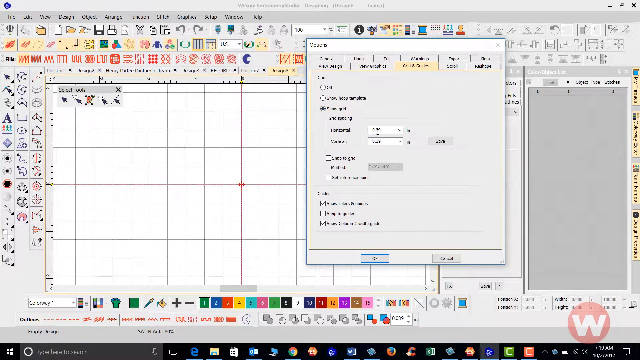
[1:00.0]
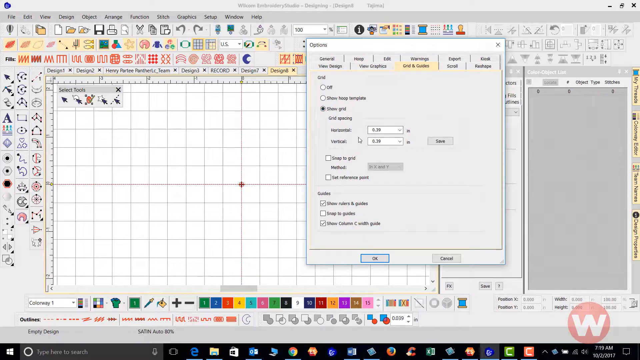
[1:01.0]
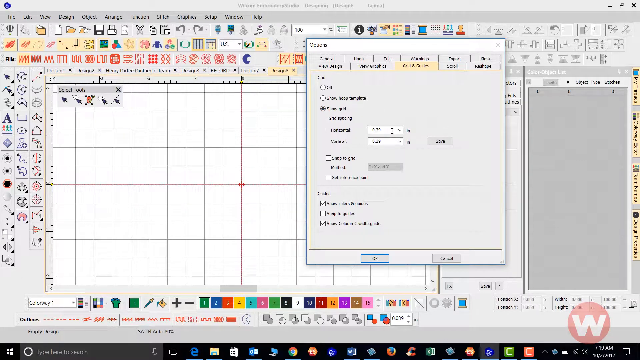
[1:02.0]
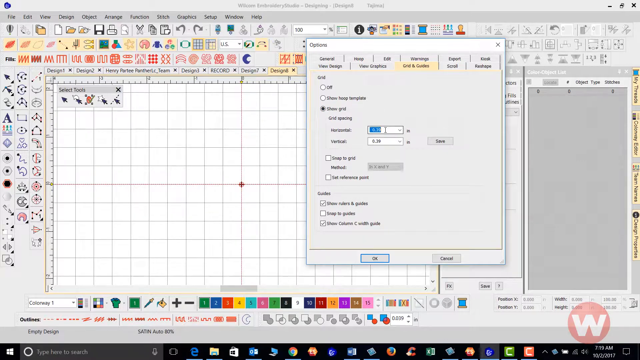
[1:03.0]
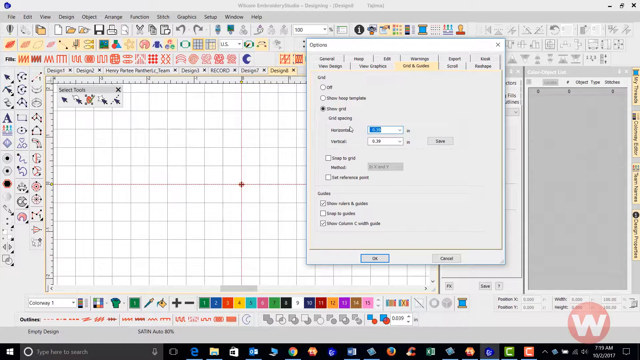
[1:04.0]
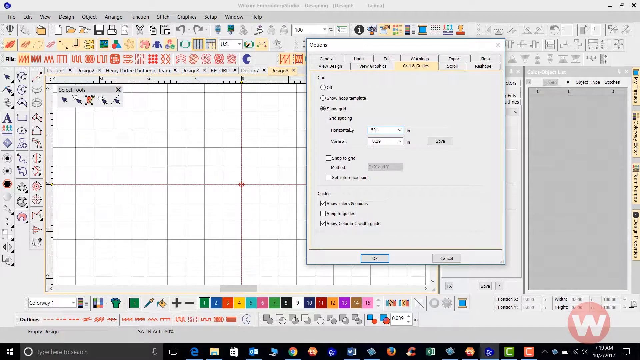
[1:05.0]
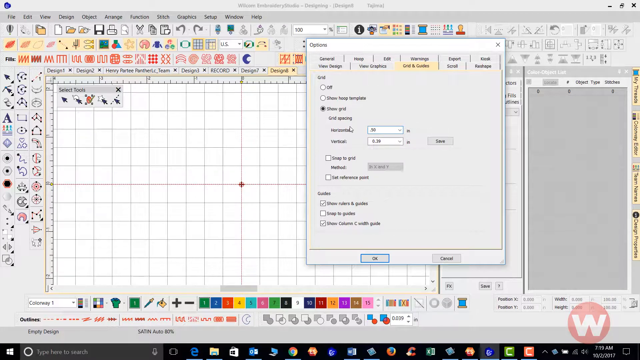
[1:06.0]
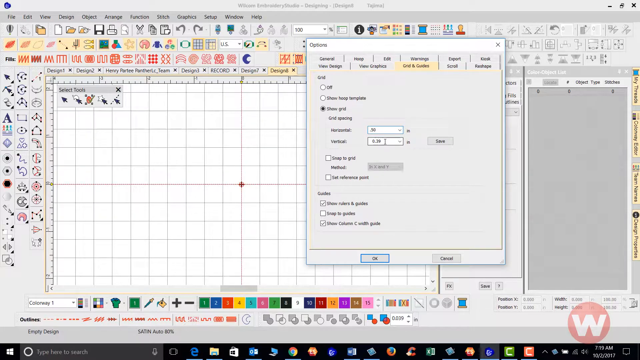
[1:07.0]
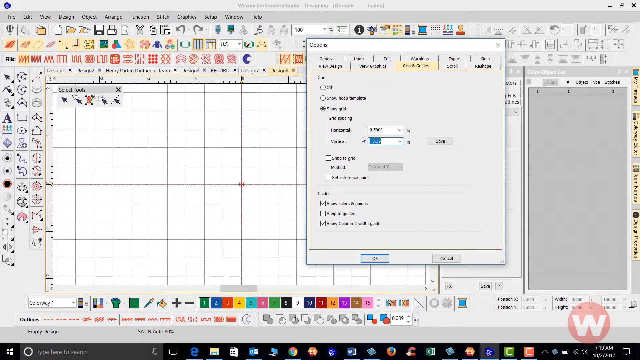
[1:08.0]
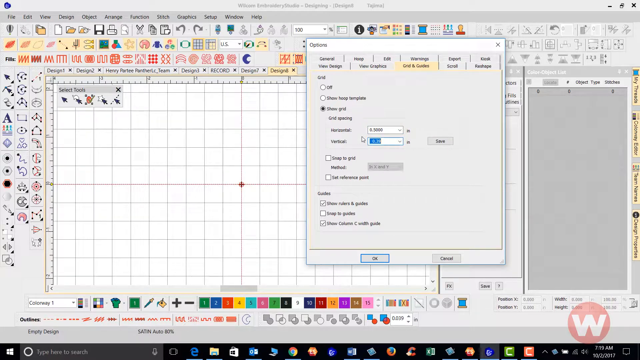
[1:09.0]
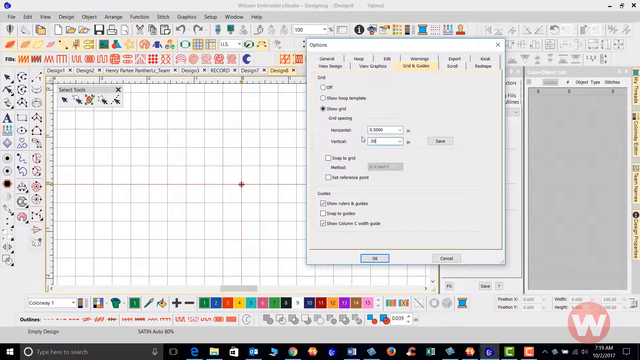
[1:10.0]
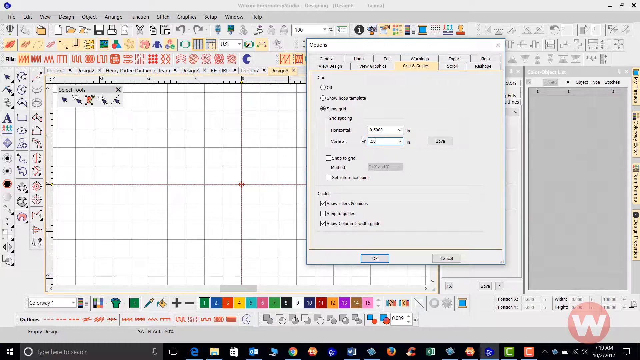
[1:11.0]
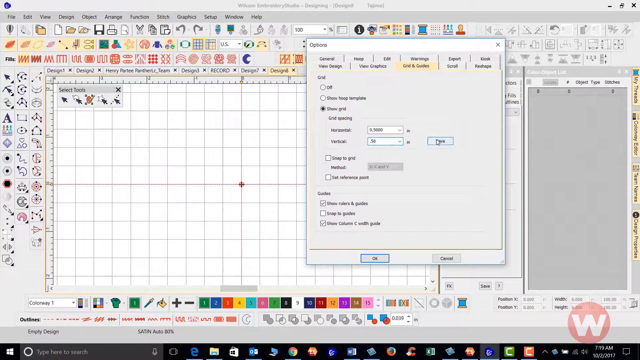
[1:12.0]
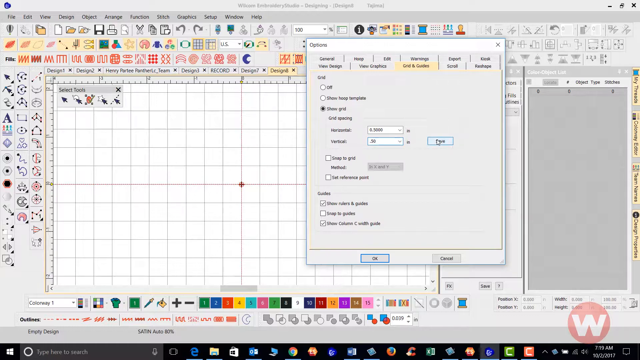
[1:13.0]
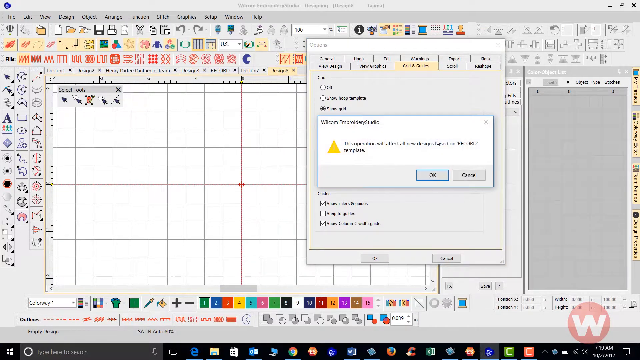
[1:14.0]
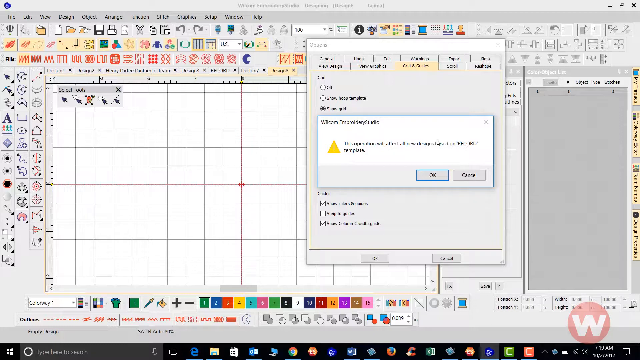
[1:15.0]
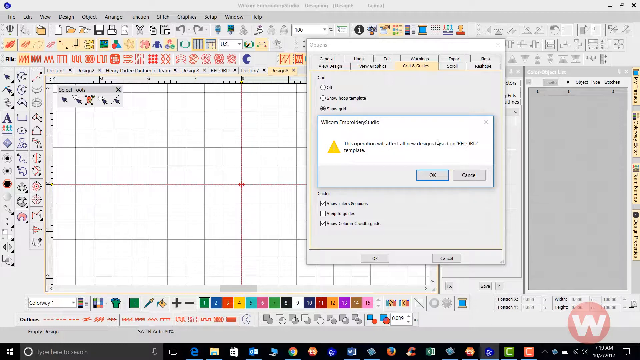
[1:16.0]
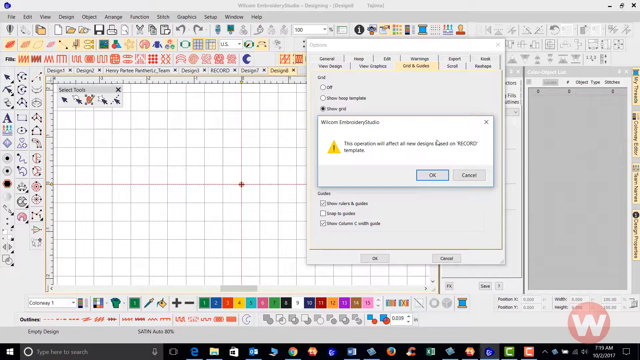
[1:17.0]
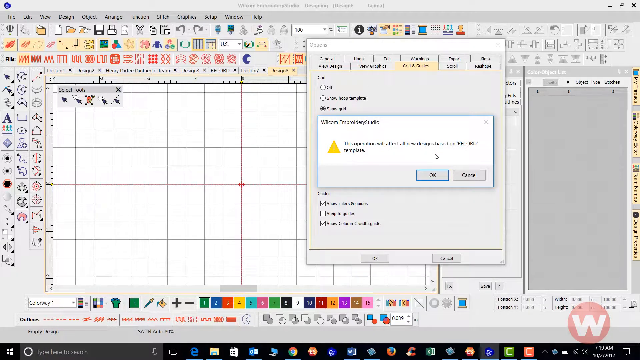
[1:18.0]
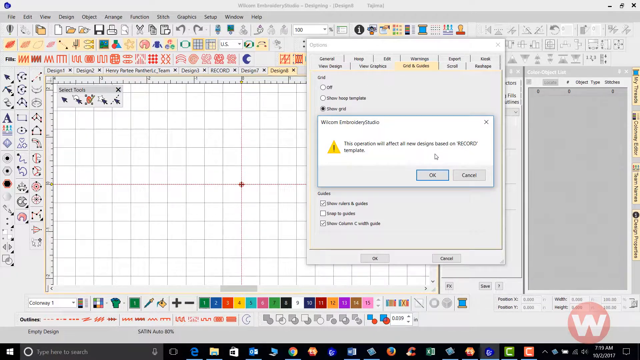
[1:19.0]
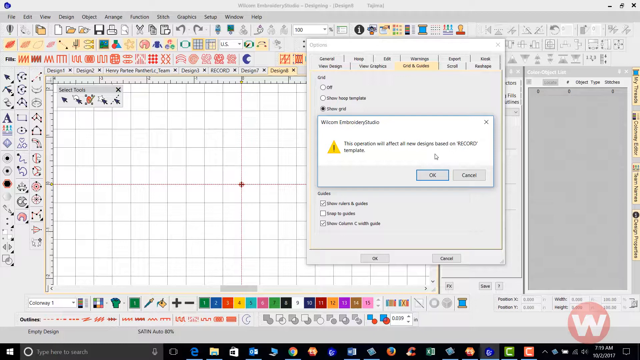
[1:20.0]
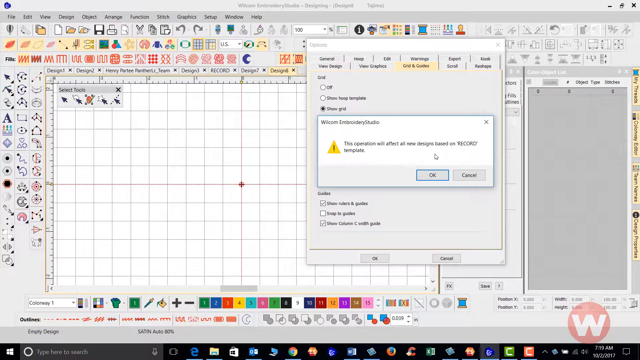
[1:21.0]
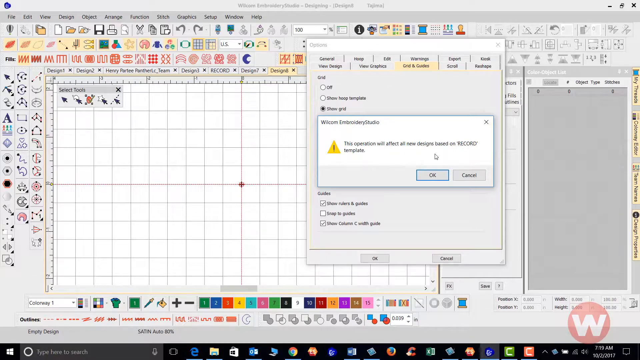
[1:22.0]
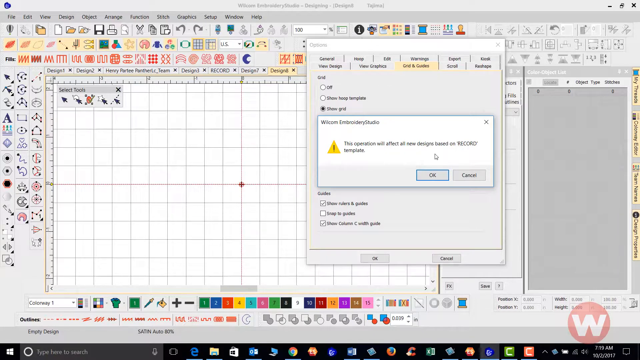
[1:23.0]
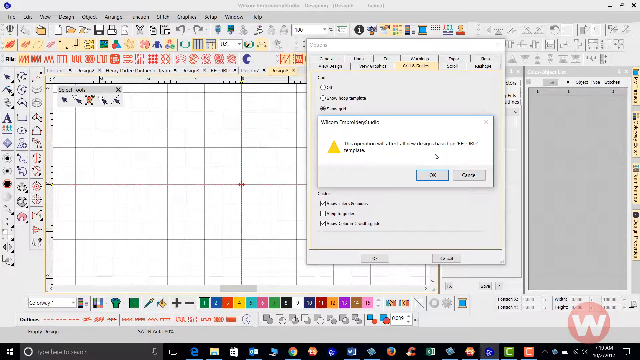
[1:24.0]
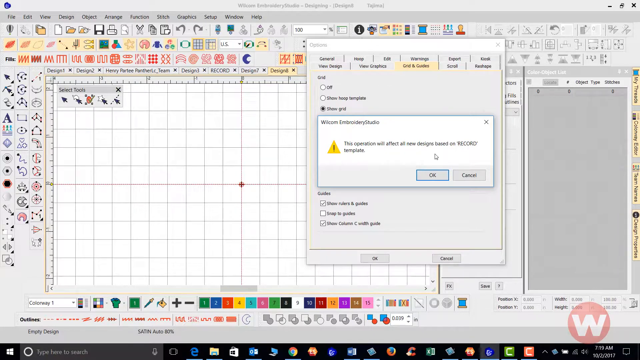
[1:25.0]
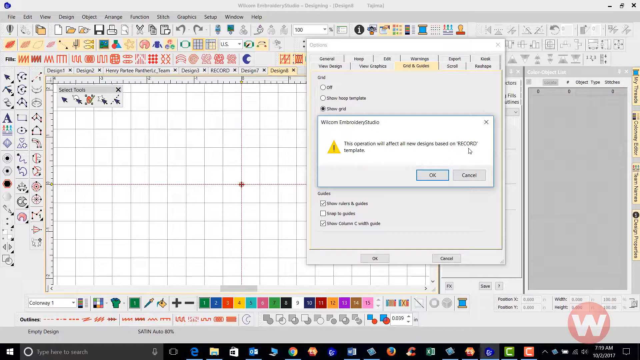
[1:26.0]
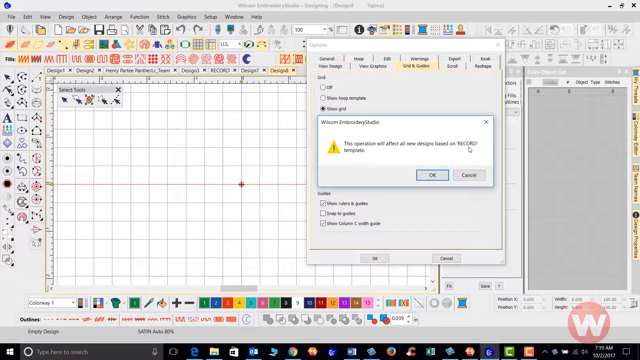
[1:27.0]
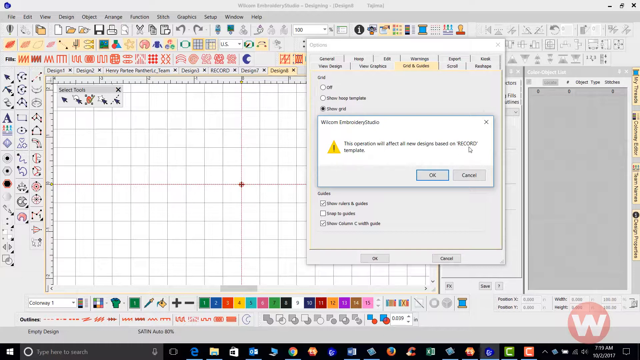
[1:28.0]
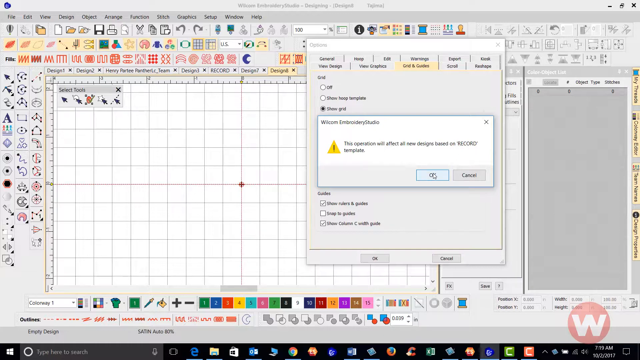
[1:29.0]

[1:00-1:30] Before the instructor adjusts the grid to 50 meters horizontal and 50 meters vertical, a message reads "this operation will affect all designs based on the Recory Template." The instructor shows the option to click OK, then options for editing colors, such as showing or hiding them, showing columns, and showing colors on the grid. An options screen lists General, Edit, Rearrange, Output, Grid and Guides, View Graphics, View Design, and Scroll, with an option to turn off the grid. Multiple functions on the side allow editing and adding lines. The instructor moves the cursor around the screen, then clicks OK and readjusts his settings.